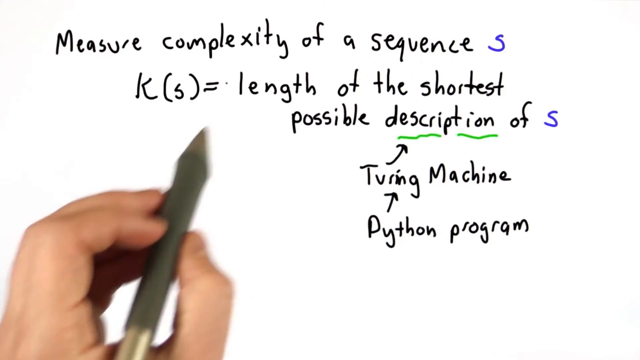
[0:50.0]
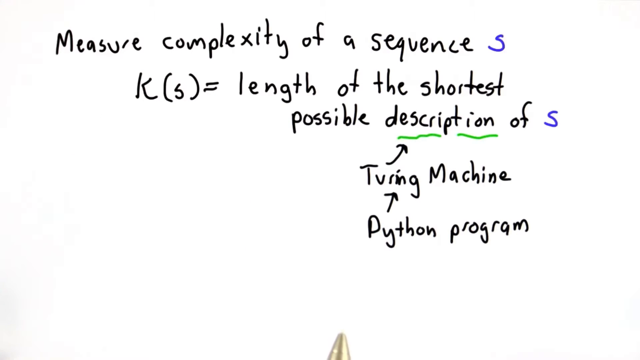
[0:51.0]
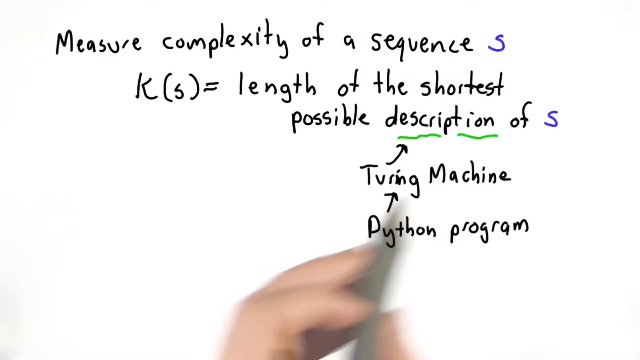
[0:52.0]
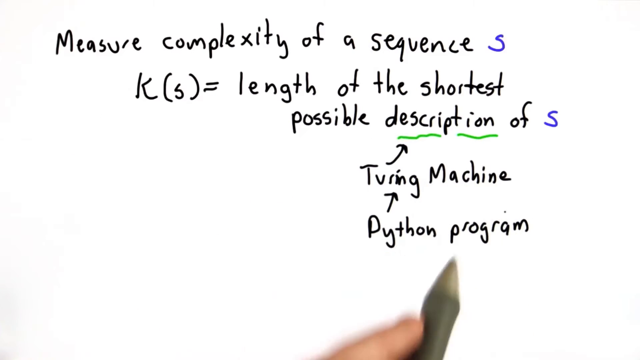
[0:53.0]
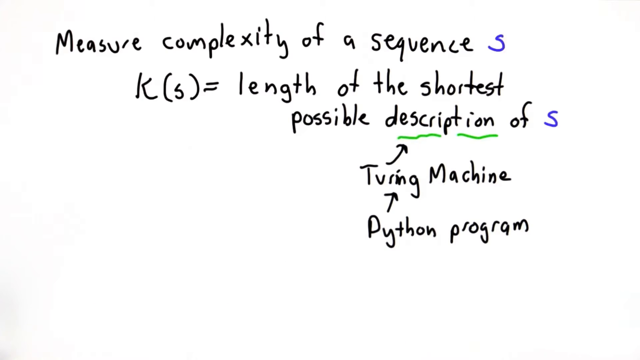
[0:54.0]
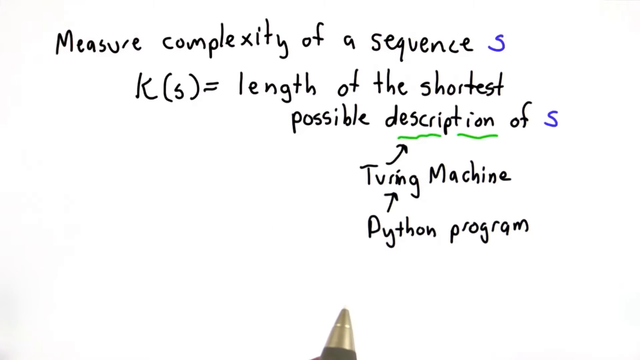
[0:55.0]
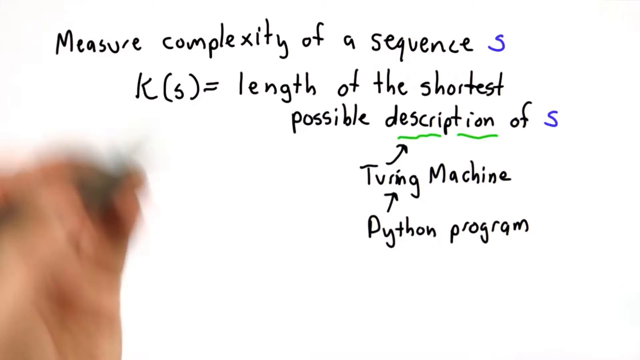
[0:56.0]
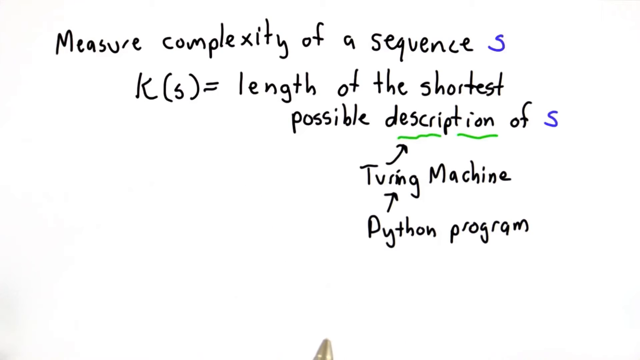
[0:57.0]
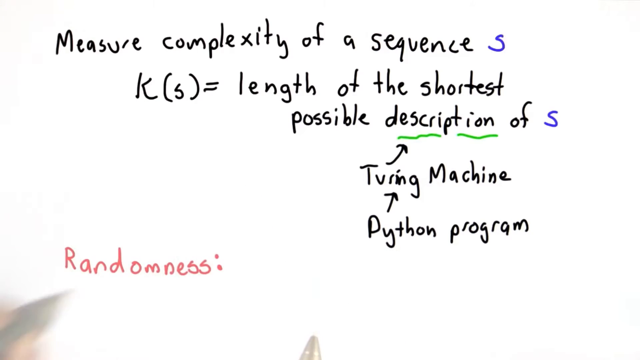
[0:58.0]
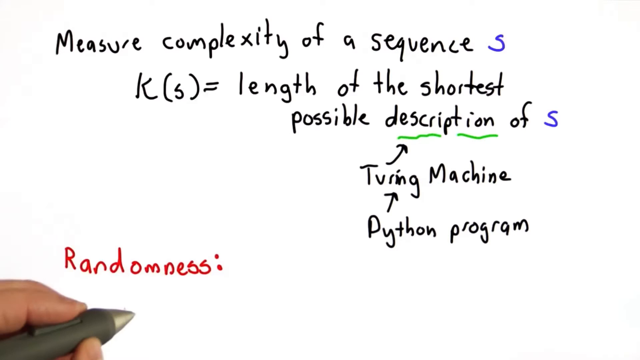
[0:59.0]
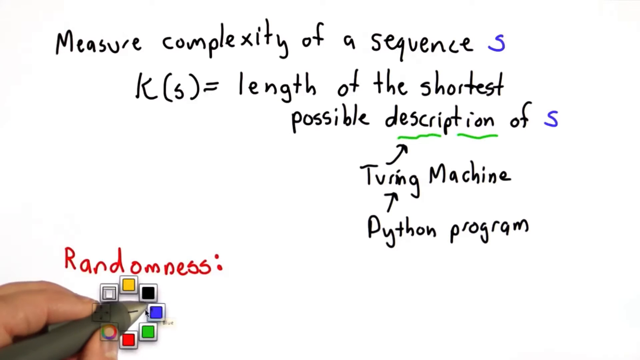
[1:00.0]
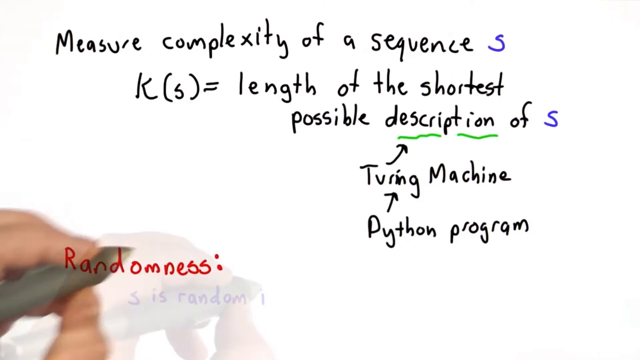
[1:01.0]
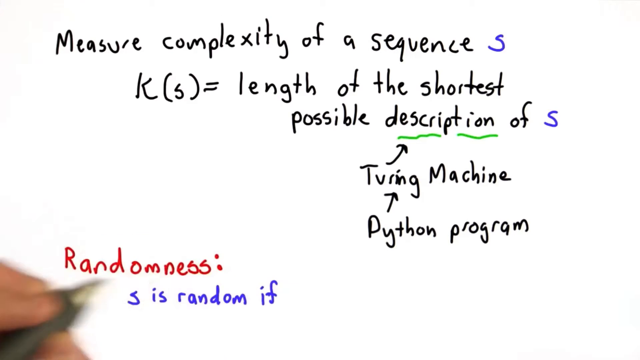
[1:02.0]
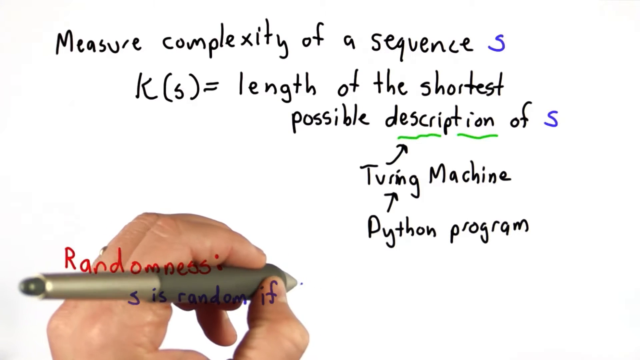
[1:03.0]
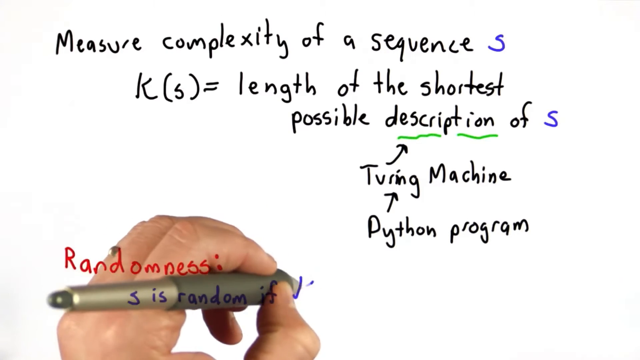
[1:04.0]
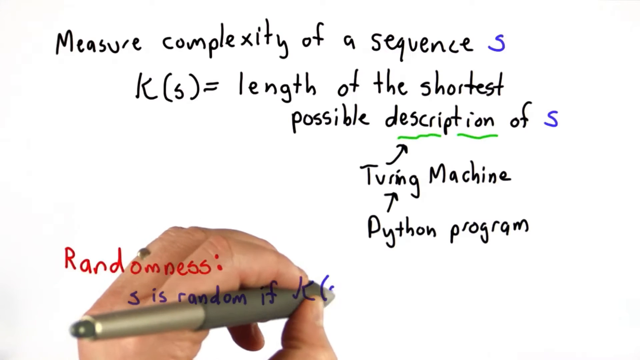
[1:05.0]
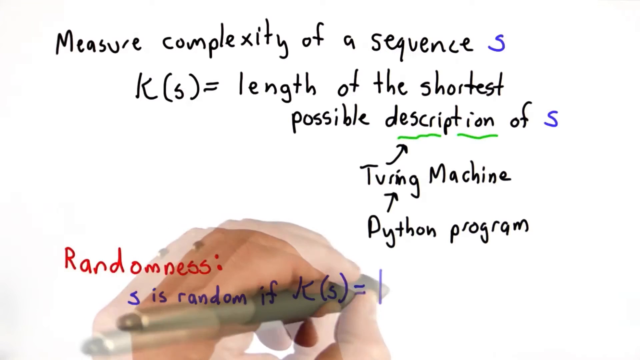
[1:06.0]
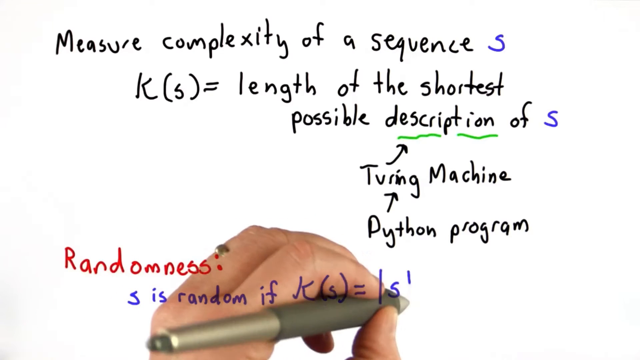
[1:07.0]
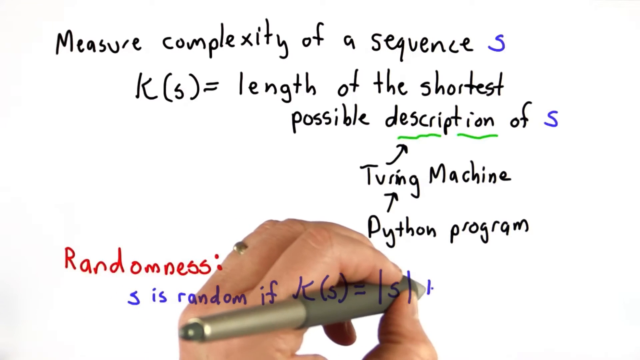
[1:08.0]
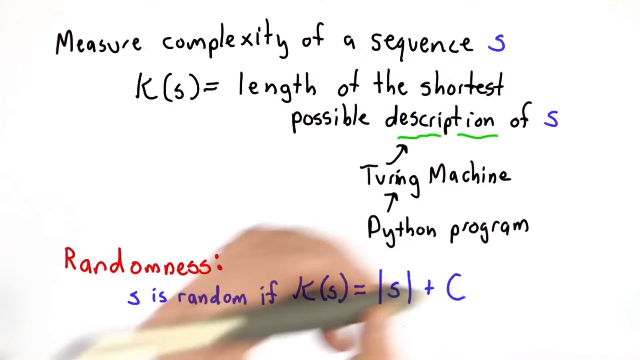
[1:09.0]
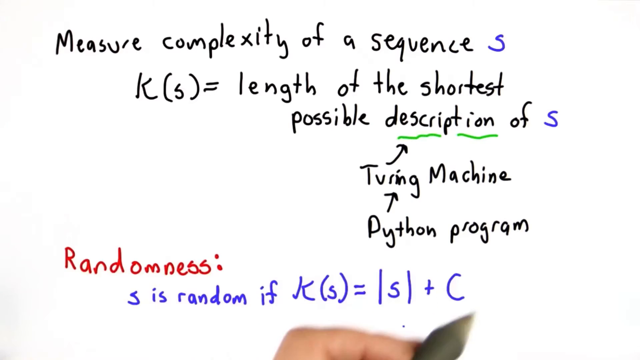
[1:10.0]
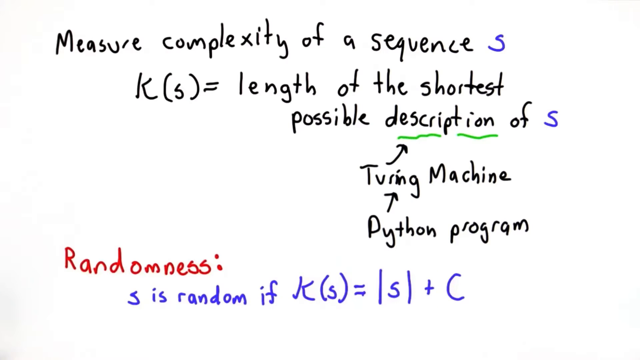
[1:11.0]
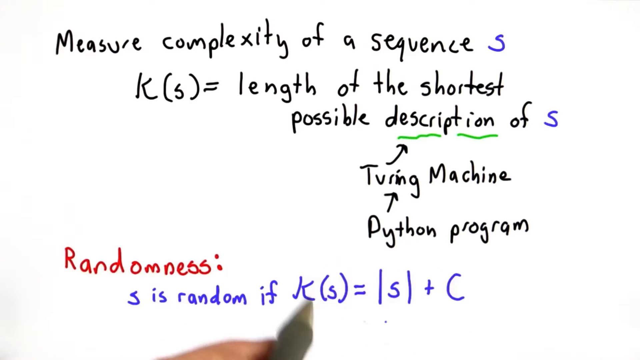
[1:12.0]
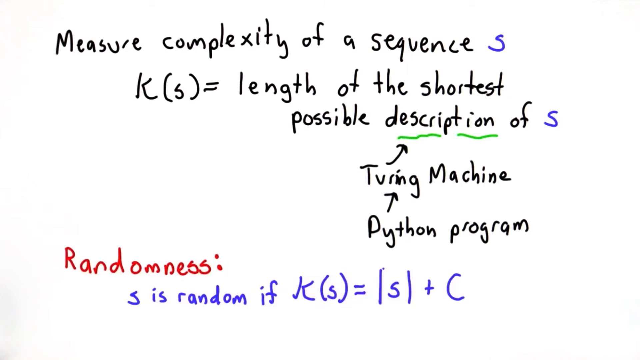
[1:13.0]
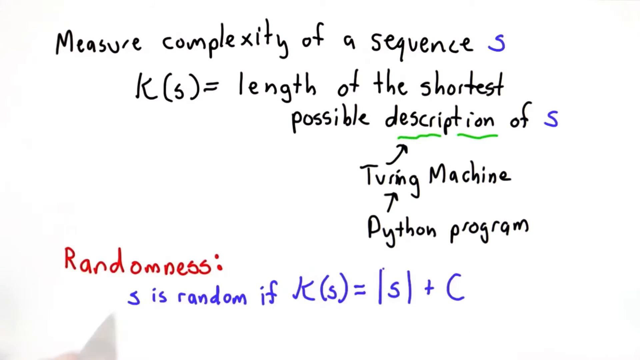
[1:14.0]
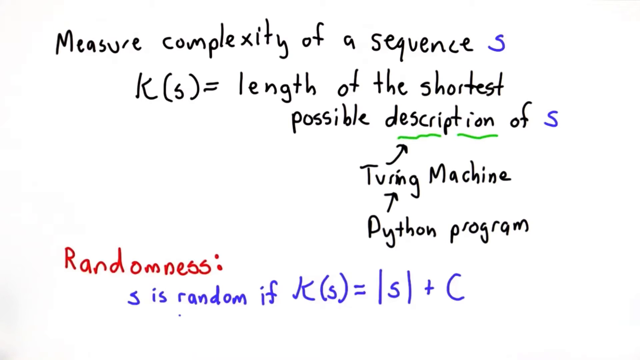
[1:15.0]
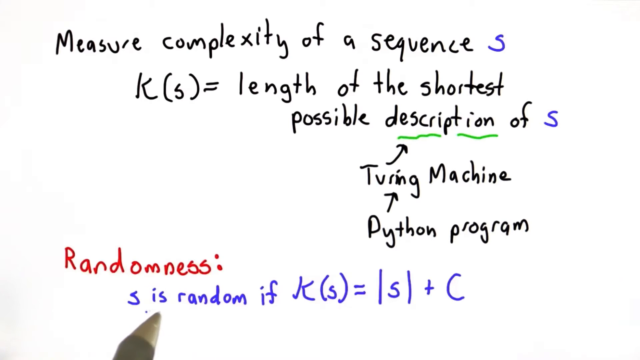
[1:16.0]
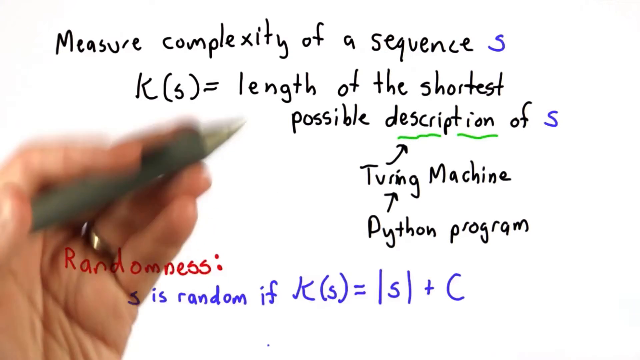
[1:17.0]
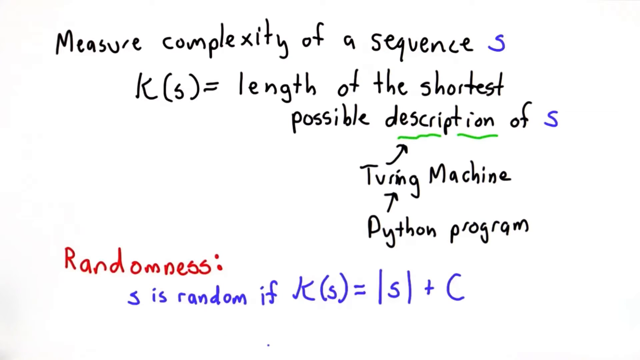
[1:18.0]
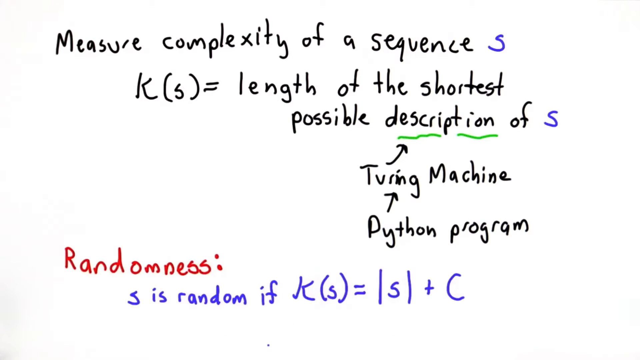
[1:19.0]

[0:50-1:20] The white screen shows, in black, "measure complexity of a sequence s," and underneath it K(s) equals "length of the shortest possible description of s." Below that is "Turing machine," with an arrow going from the word "Turing" up to "description," and under that "Python program," with an arrow pointing from "Python" up to "Turing." A left hand with a ring on its ring finger holds a gold-colored pen; wherever he puts the pen there is a small dot, and what he writes appears on the screen. In the bottom left-hand corner, the word "randomness" appears in red. In blue, he writes that s is random if K(s) equals s plus C. The hand then slowly circles the letter C without writing anything.